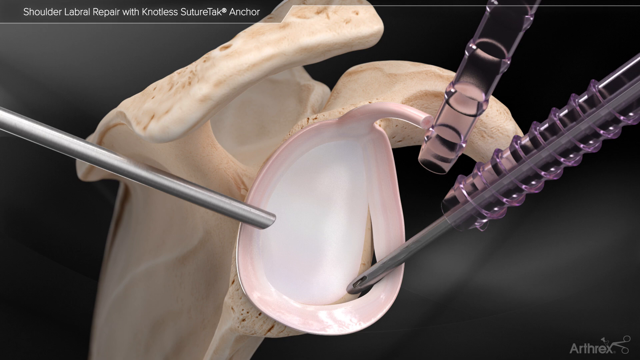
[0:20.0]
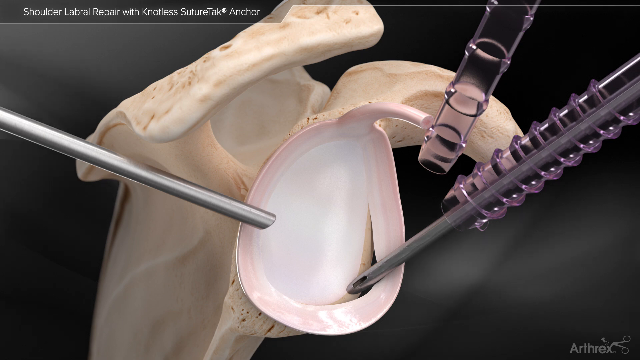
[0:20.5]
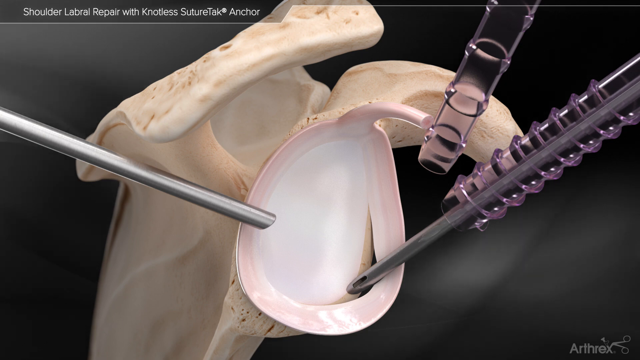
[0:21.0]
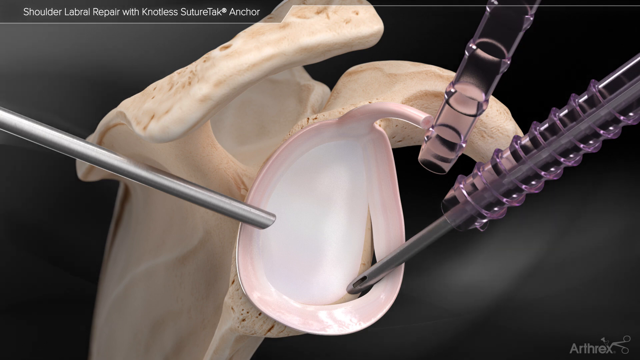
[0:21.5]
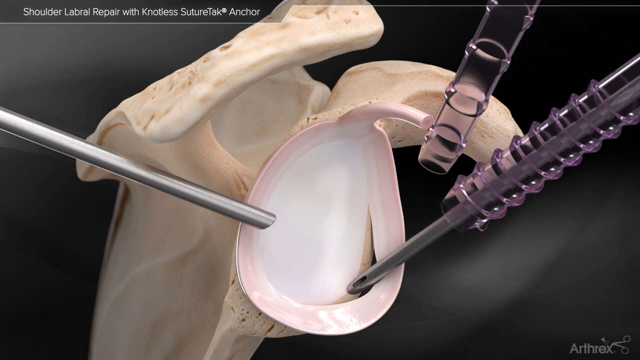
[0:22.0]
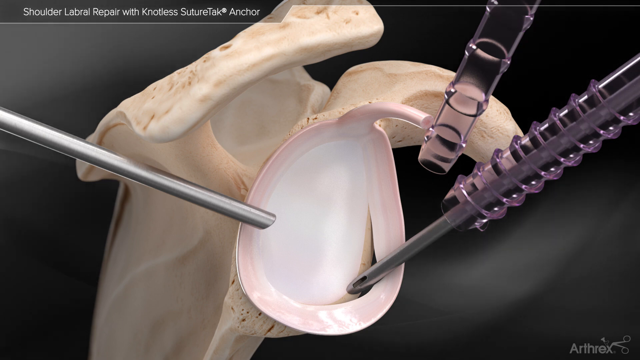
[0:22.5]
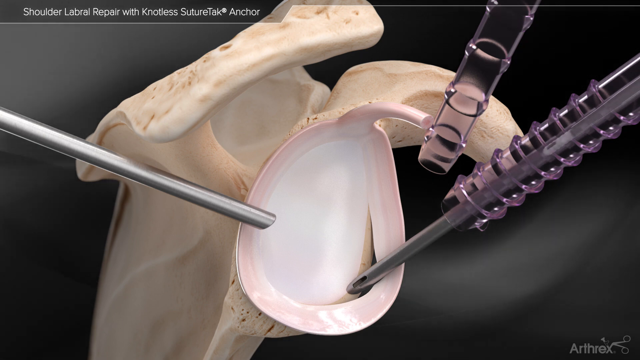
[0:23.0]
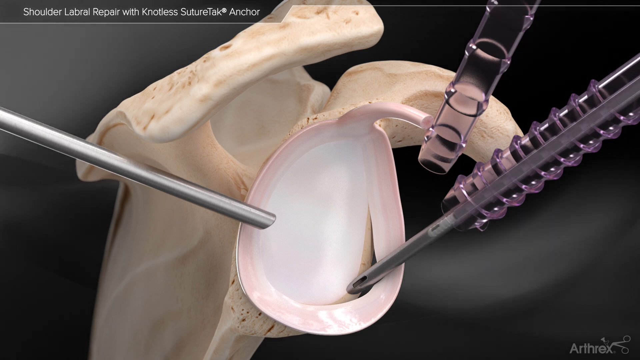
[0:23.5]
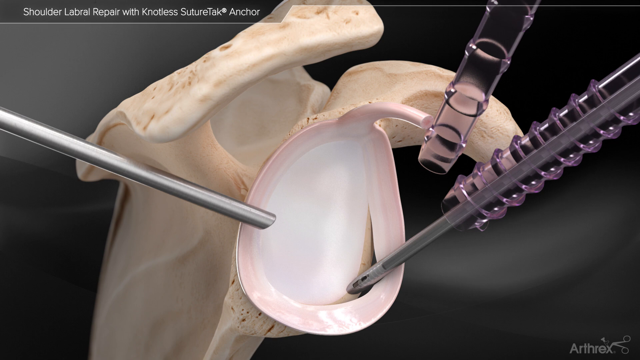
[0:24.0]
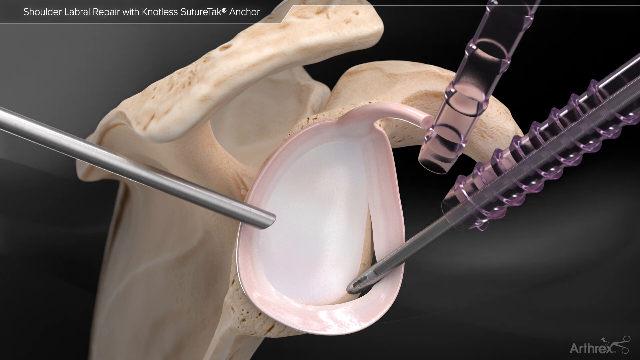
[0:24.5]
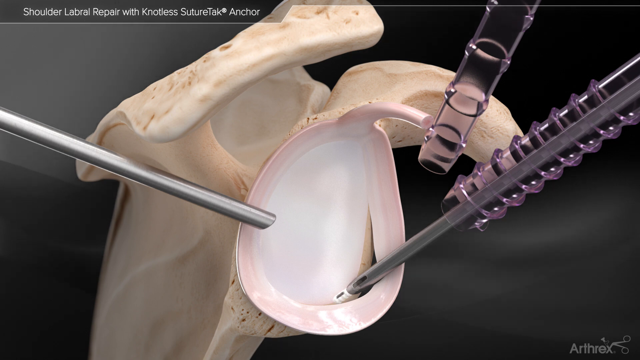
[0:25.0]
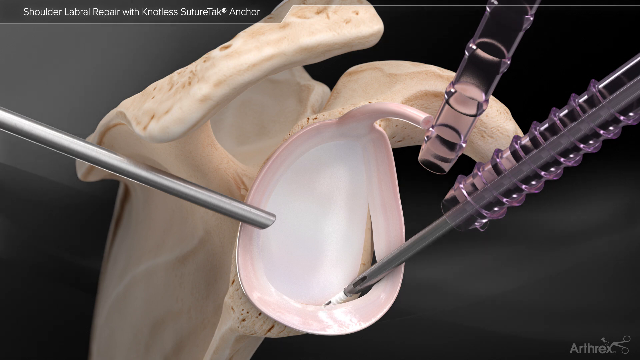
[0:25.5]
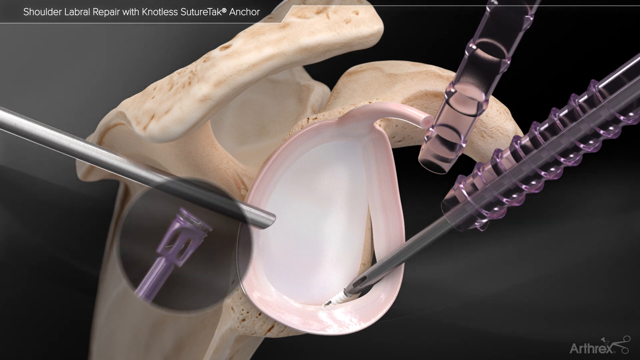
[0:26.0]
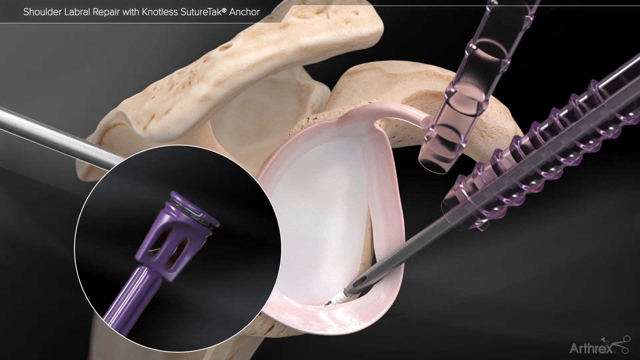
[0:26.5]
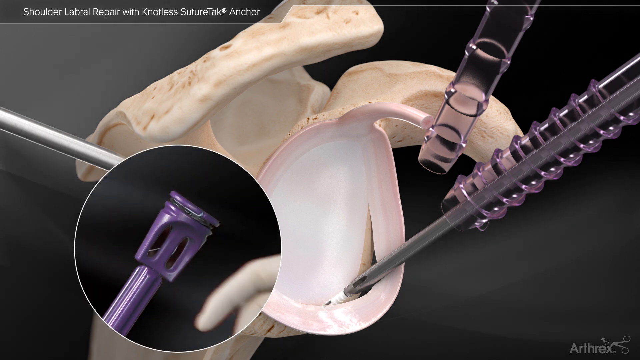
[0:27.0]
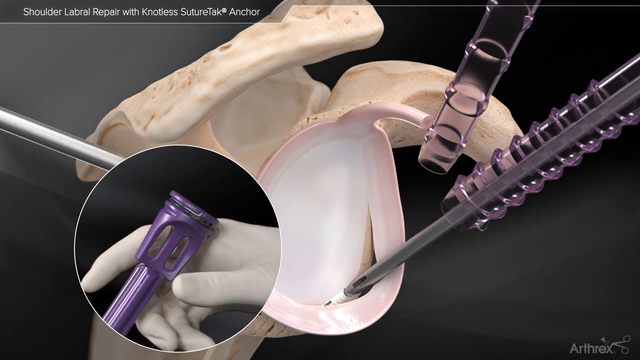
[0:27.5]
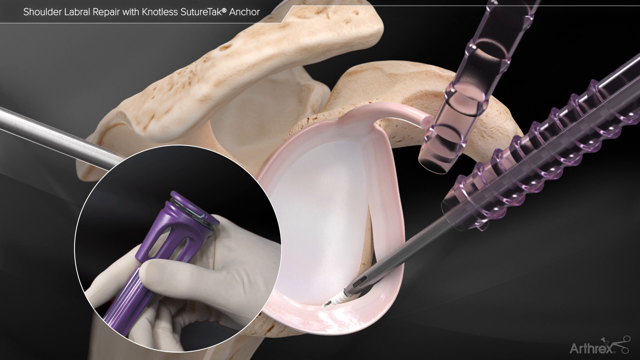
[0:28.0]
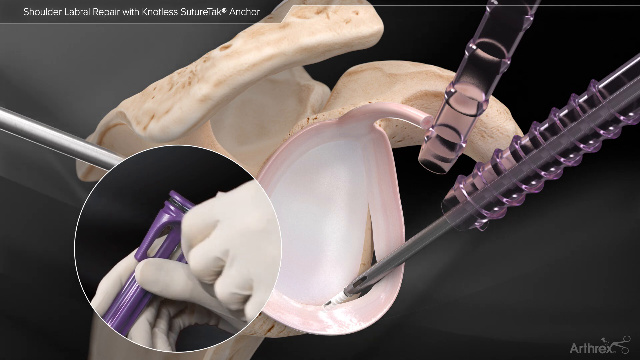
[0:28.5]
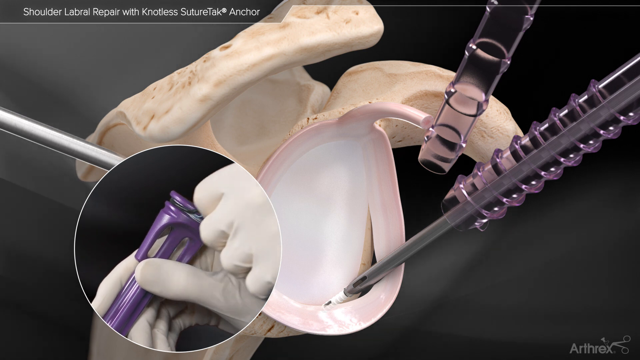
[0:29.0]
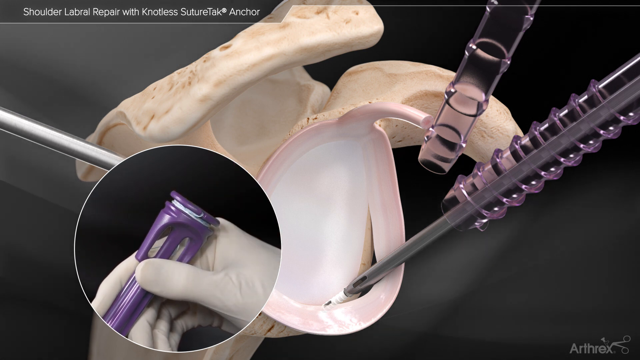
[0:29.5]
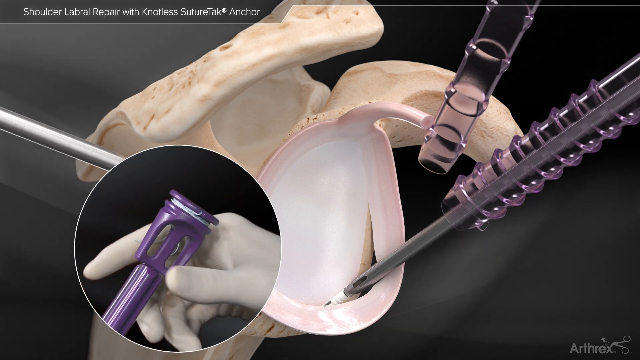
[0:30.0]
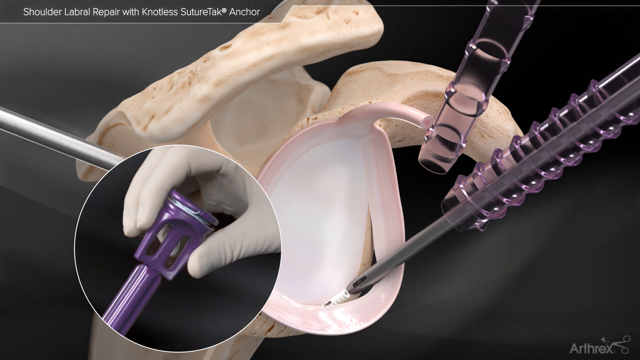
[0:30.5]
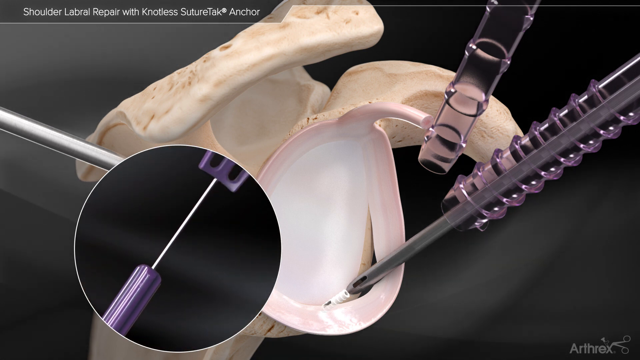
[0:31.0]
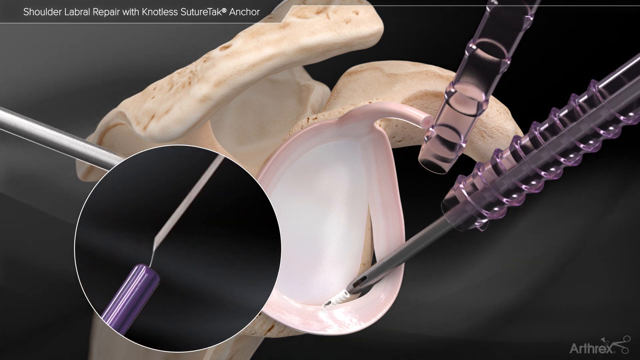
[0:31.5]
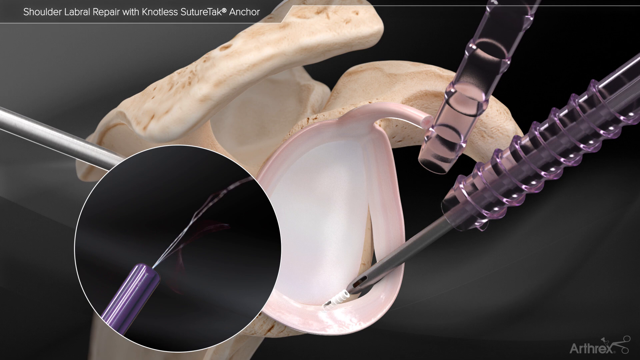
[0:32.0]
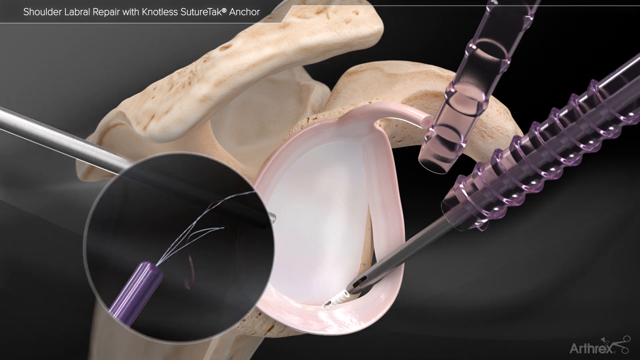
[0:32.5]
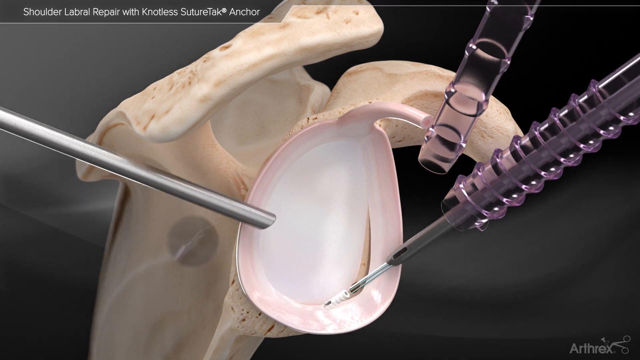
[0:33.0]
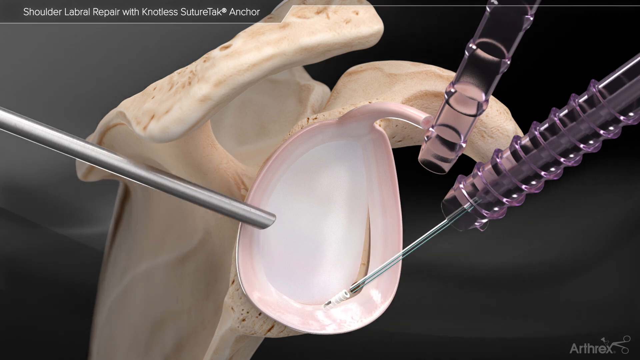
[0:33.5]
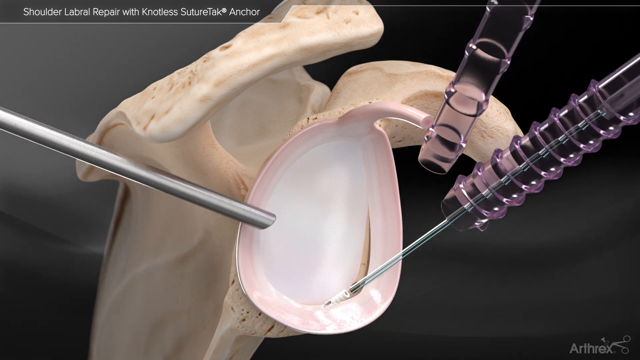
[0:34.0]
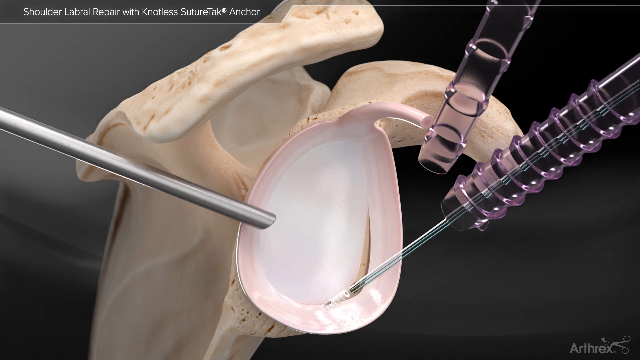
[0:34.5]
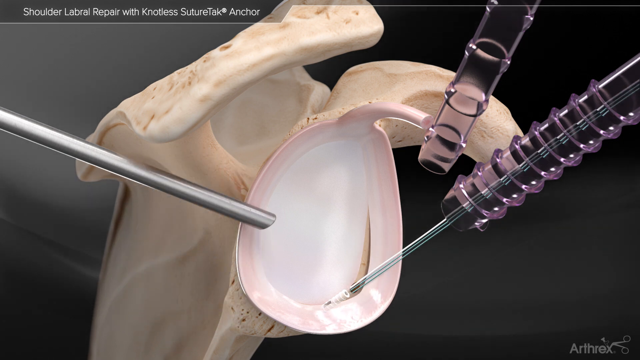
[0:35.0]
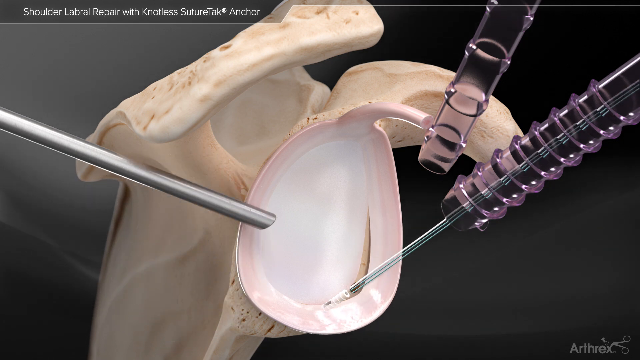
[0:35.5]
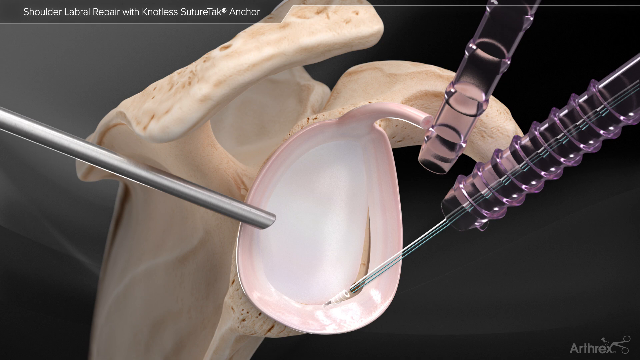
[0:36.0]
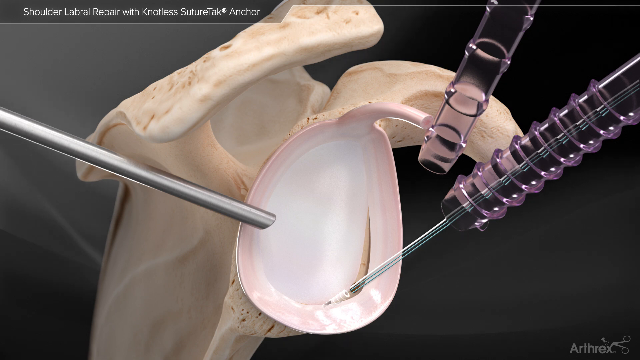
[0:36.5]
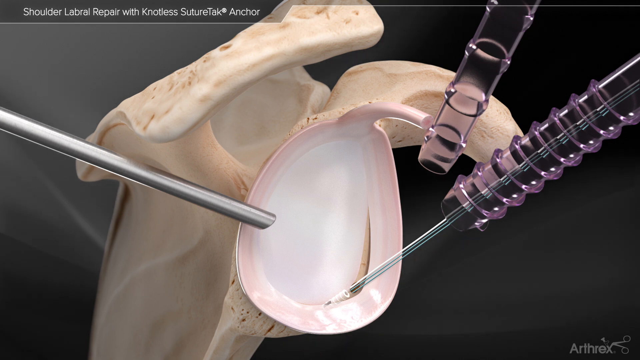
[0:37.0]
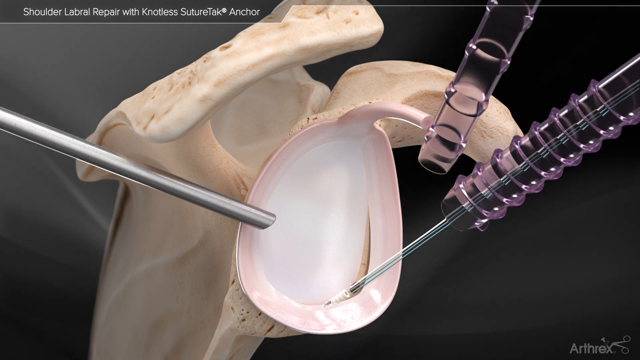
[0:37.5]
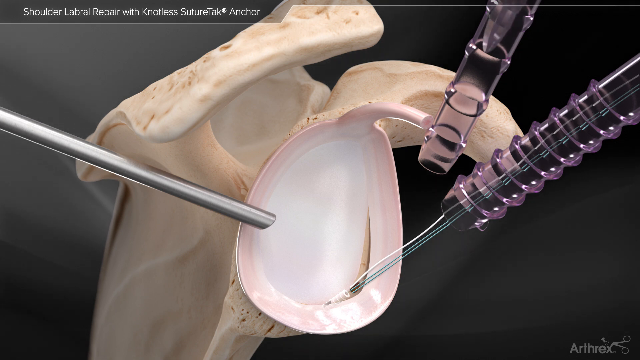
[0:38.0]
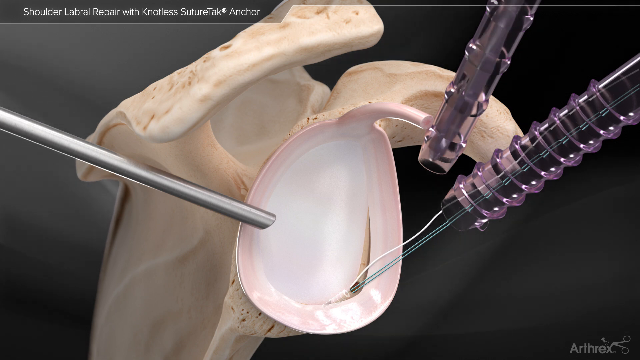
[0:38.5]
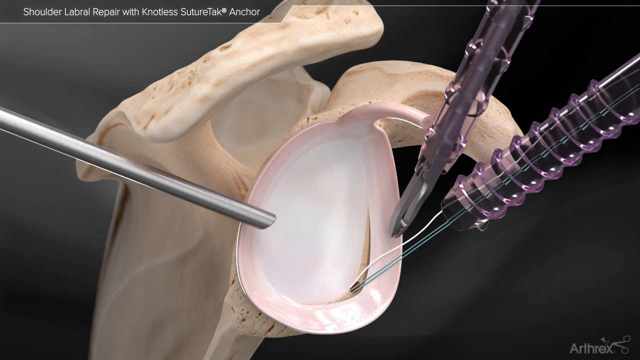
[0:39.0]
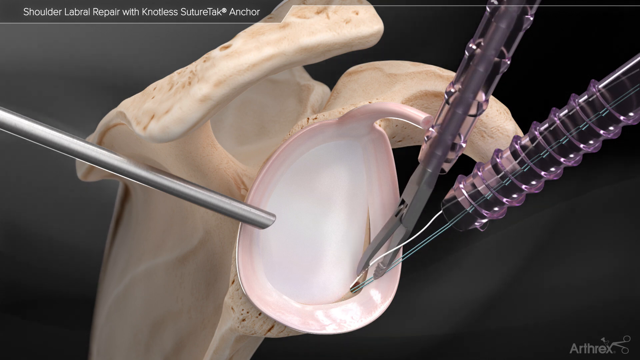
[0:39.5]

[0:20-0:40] A bone of some sort, possibly the ear canal, is shown with a metal piece penetrating the white part of the bone. There are two purple plastic pieces, and through one of them a metal piece comes through and goes into the bone. After shooting liquid out, it now appears to be sucking the liquid back out. A close-up shows the purple piece with its top taken off, and what looks like a metal piece is pulled out with string coming out of its bottom. Another close-up shows the string as that piece is pulled out, and then what looks like scissors go down the other plastic piece and cut the string that was just pulled out.